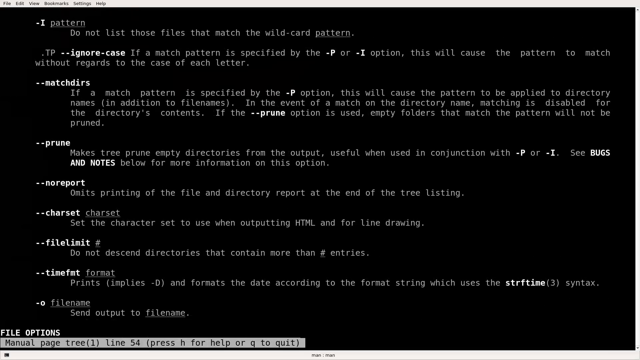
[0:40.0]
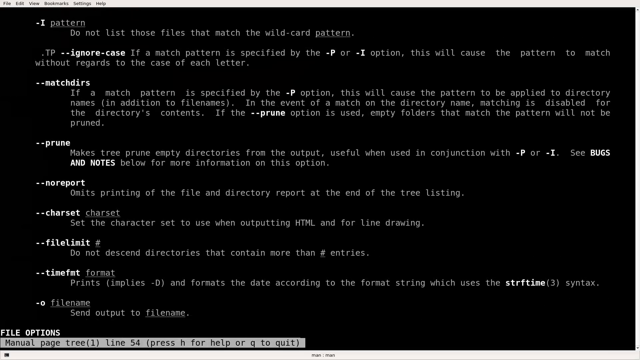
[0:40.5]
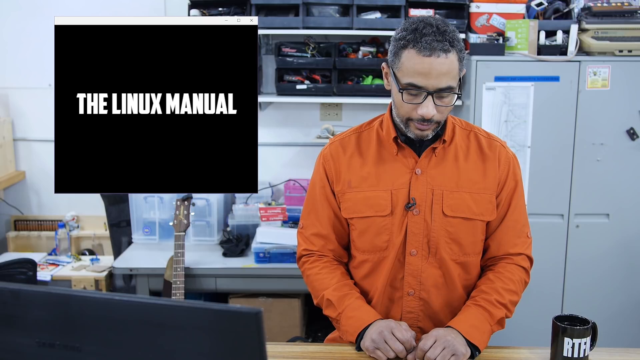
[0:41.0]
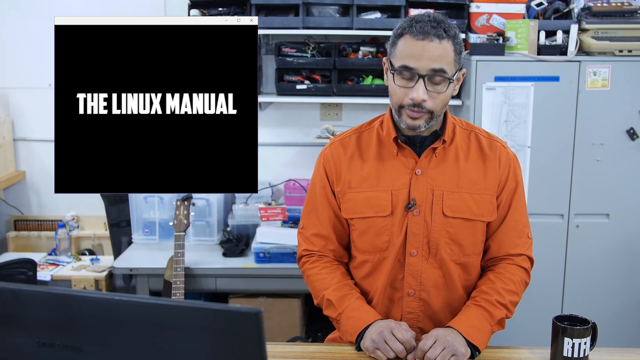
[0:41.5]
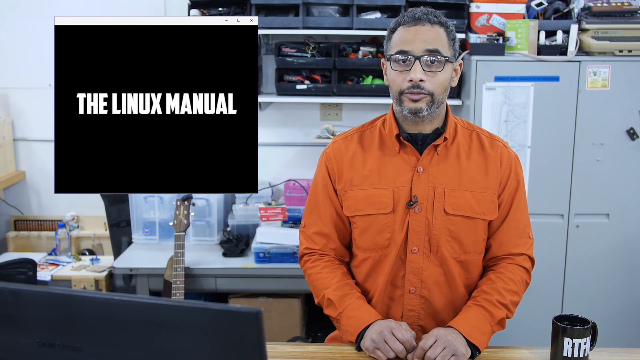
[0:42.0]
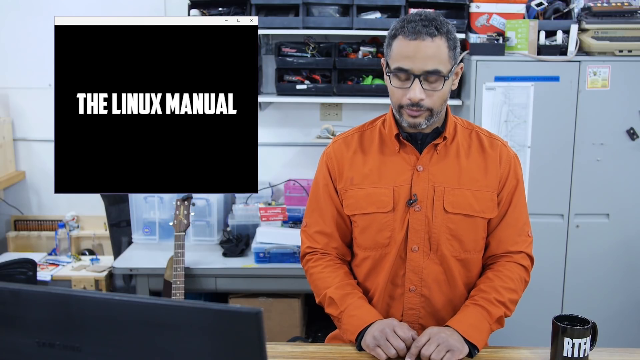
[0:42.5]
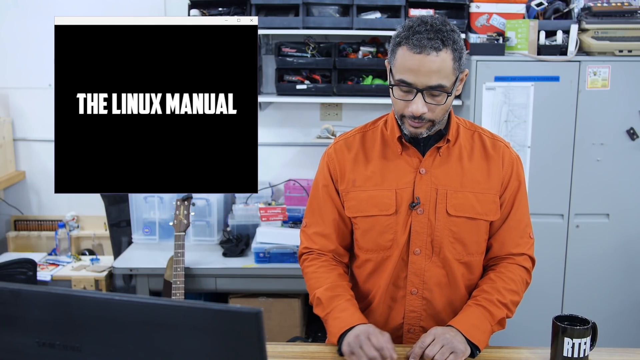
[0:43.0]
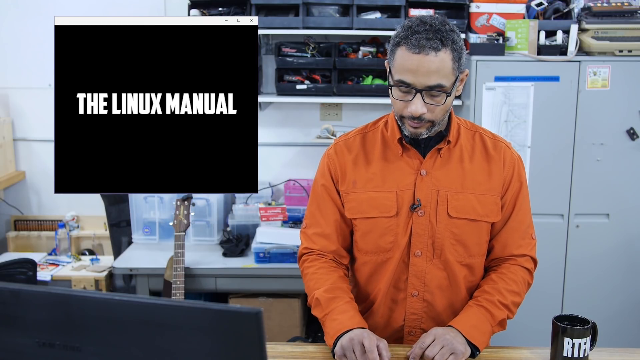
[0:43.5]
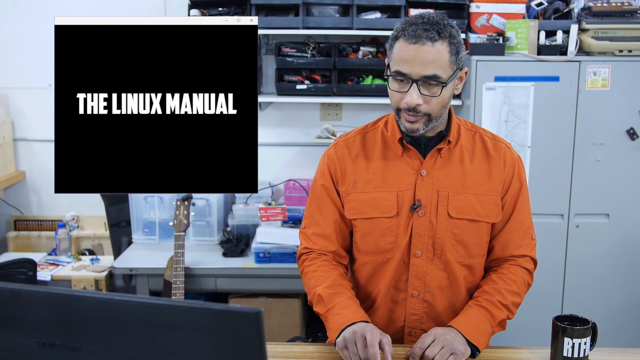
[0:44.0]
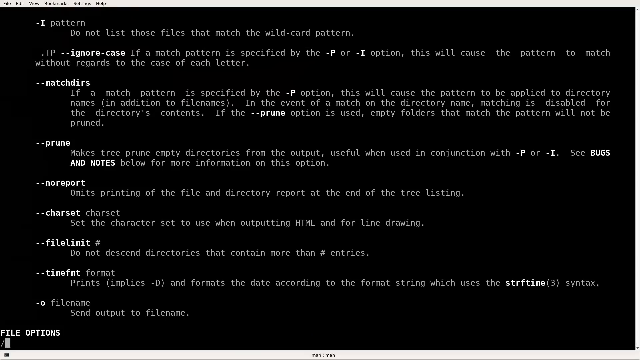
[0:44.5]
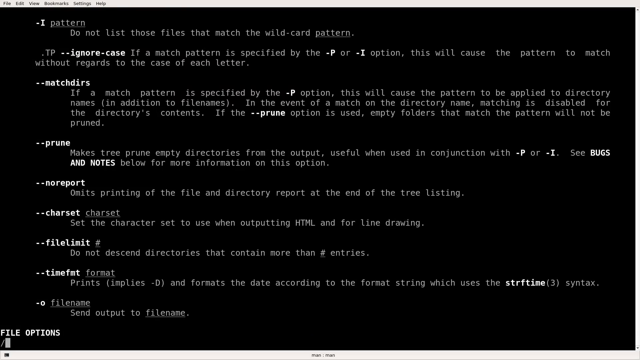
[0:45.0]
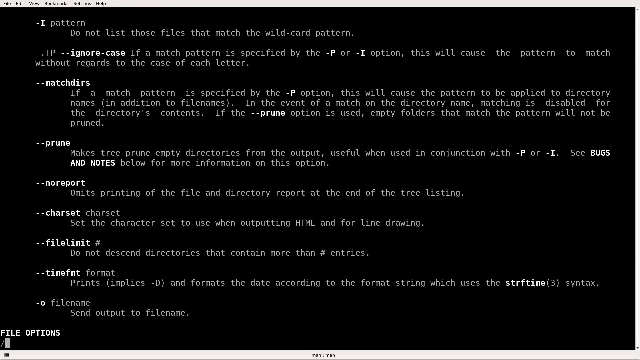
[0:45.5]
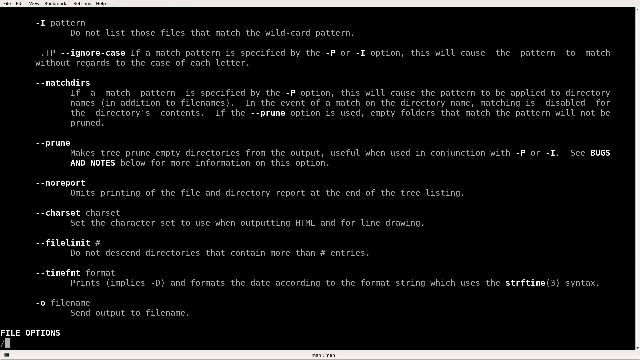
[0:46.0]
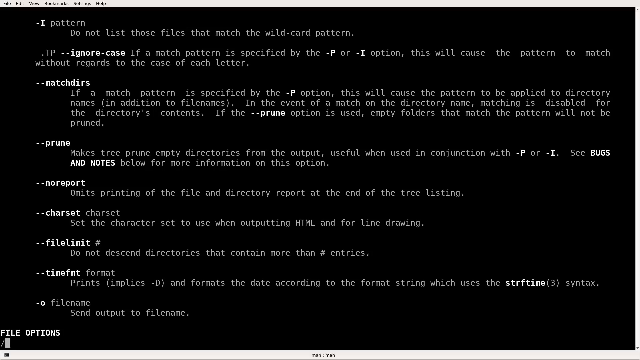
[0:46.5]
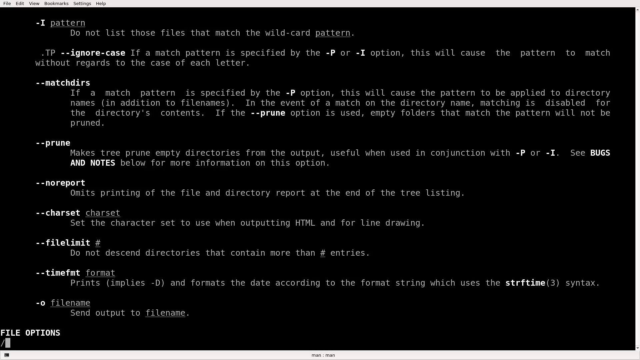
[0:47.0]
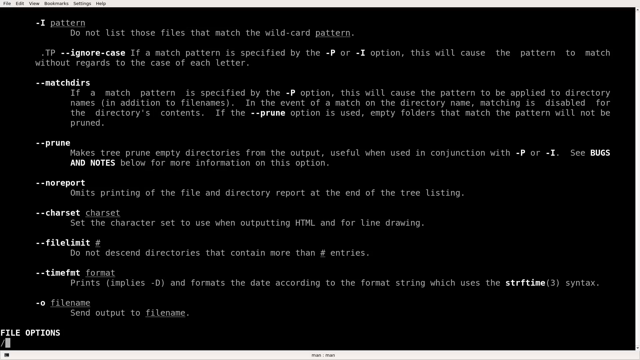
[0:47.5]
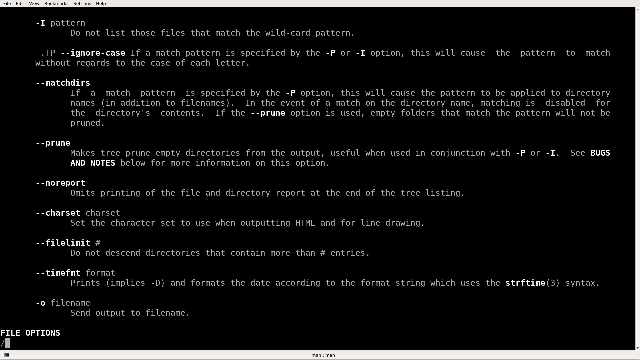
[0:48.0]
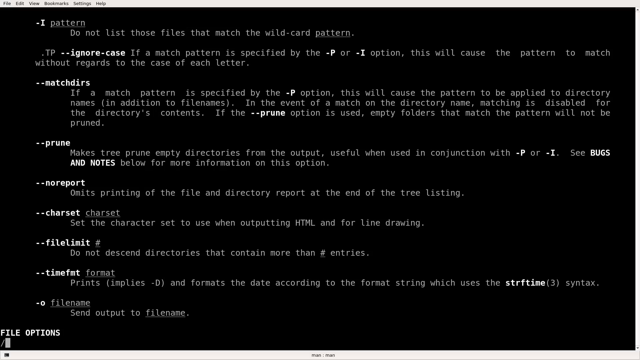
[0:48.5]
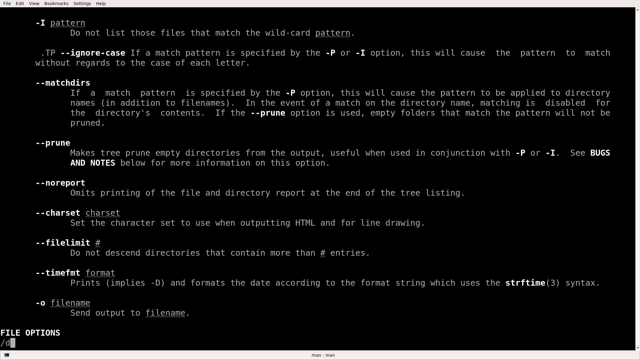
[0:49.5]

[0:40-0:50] A long list of commands is shown, including one reading "prune" with "makes trees" and more information after it. The view quickly switches to the person, who wears an orange long-sleeved button-down shirt, looking down and moving a hand on what seems to be the computer. It quickly switches back to the same page, which reads "prune, makes tree prune, empty directories from the output." Underneath that it reads "no report," and underneath that "charset," followed by a few other entries. The page stays stationary, apparently the part of most interest to the person. A box reading "Linux manual" pops up next to the person, looking like an overlay of information. Cords and things of that nature are visible in the shop setting.